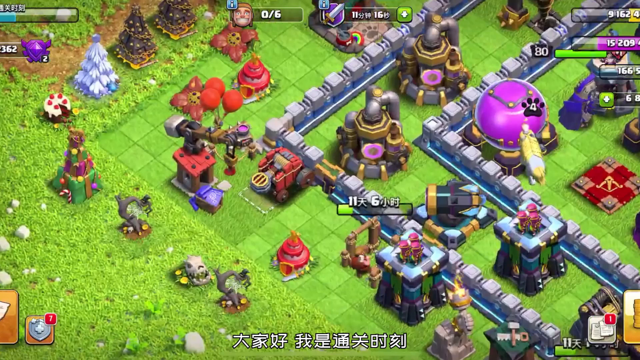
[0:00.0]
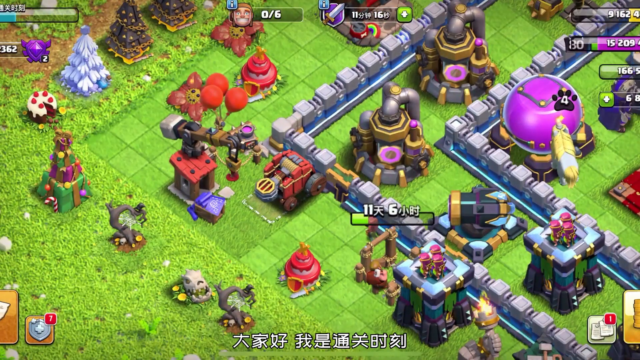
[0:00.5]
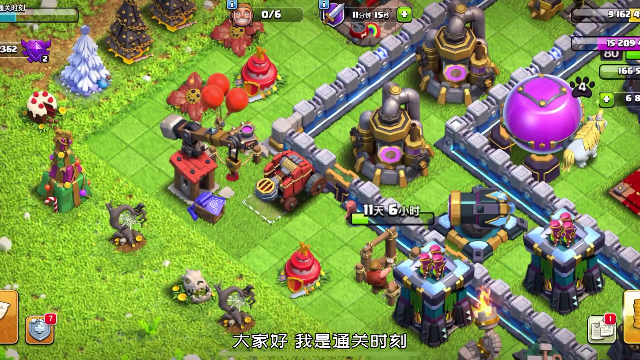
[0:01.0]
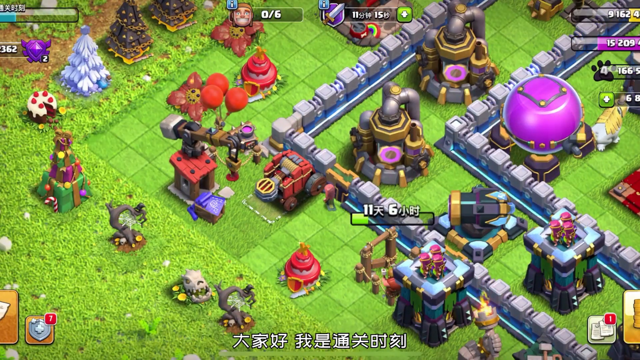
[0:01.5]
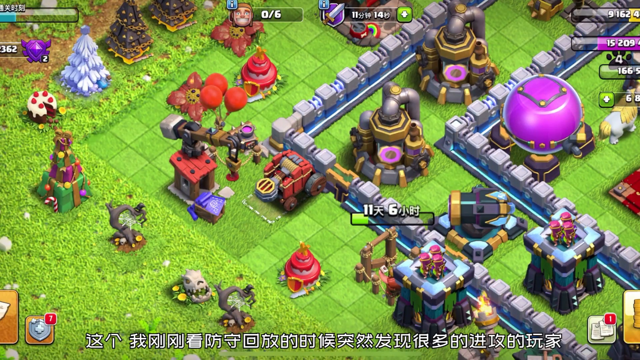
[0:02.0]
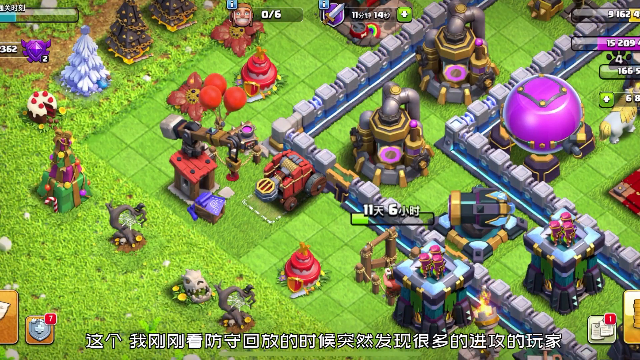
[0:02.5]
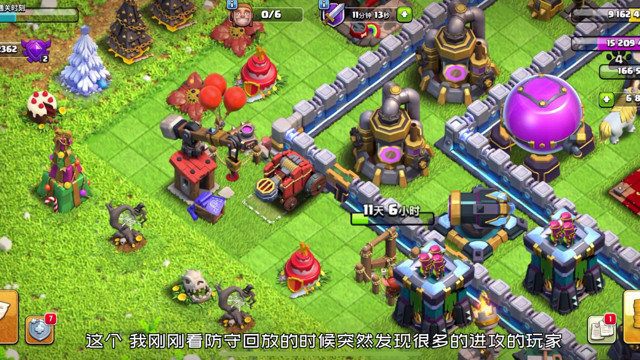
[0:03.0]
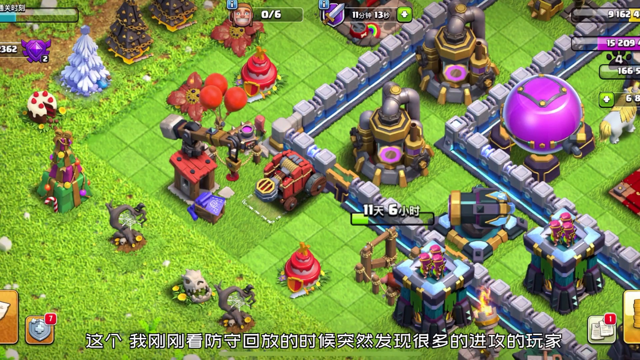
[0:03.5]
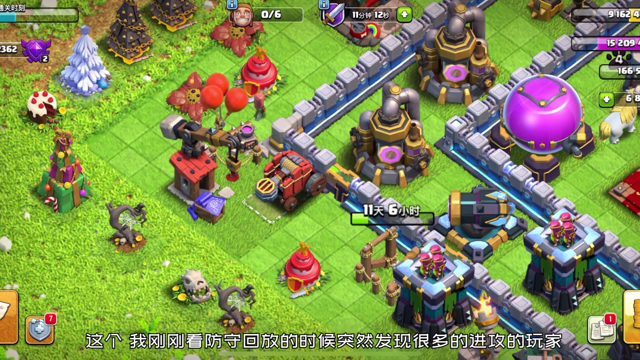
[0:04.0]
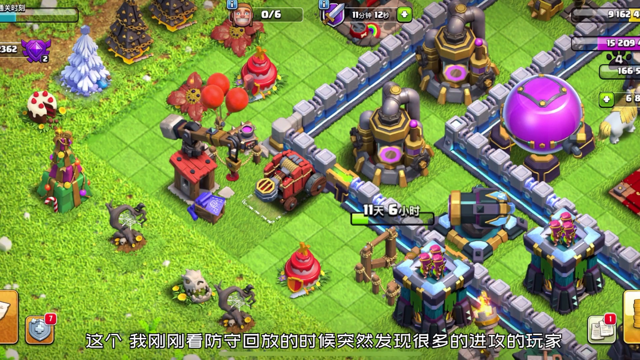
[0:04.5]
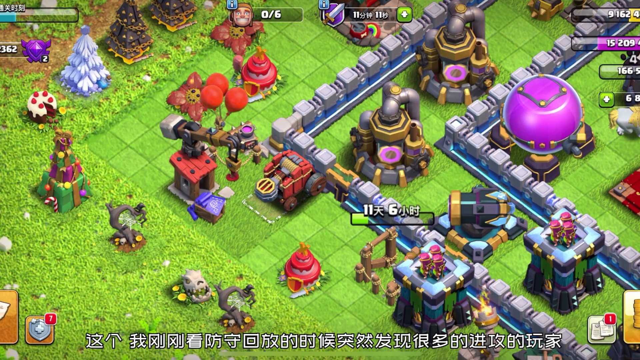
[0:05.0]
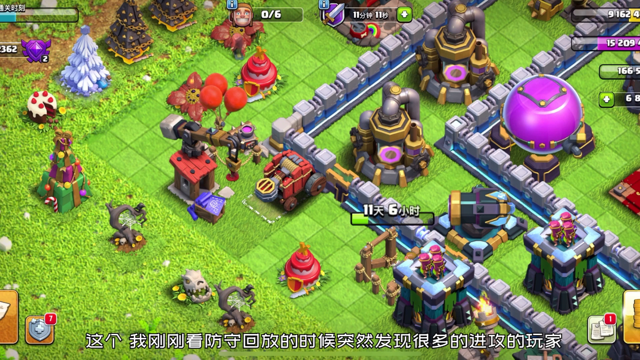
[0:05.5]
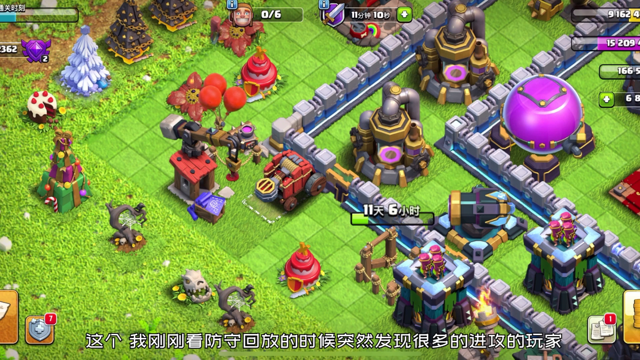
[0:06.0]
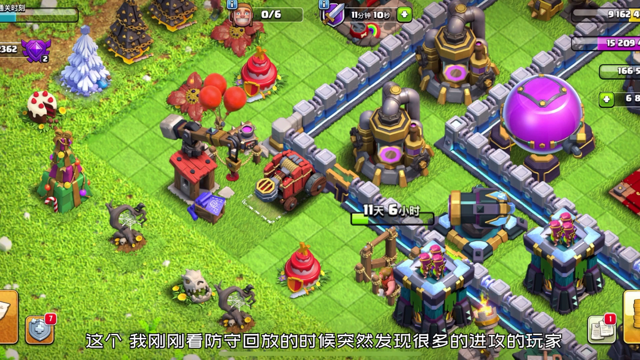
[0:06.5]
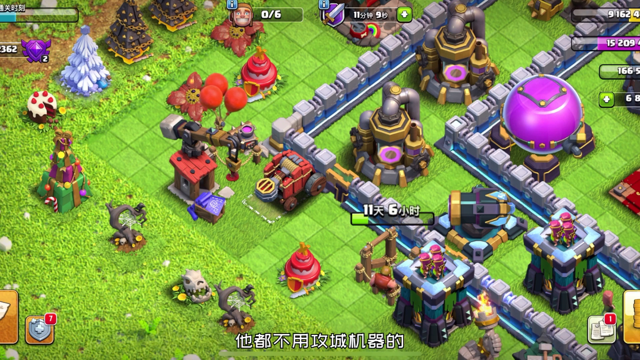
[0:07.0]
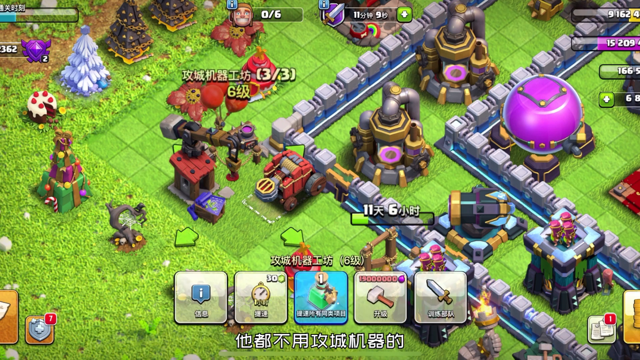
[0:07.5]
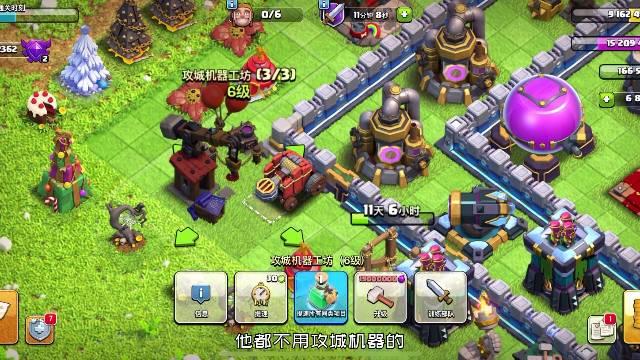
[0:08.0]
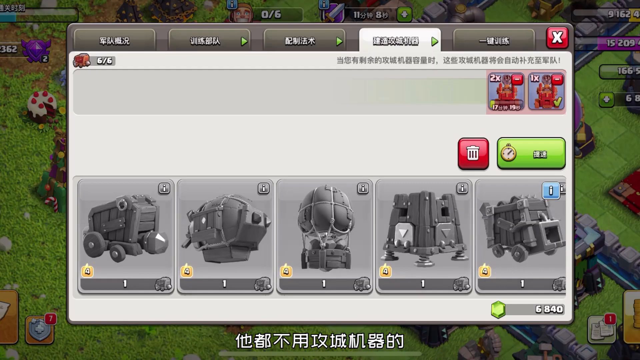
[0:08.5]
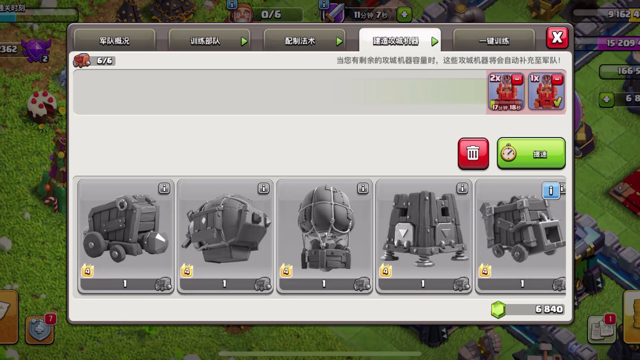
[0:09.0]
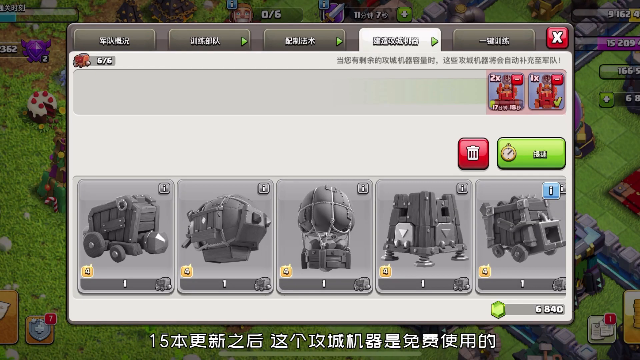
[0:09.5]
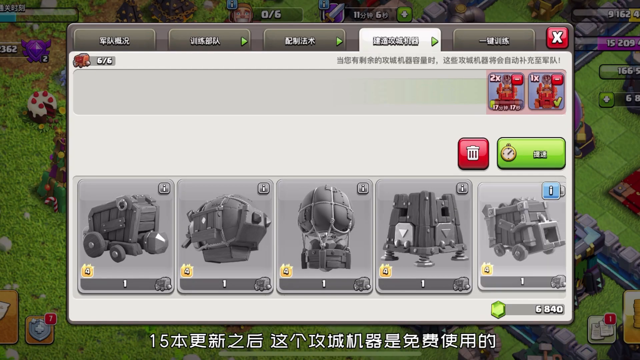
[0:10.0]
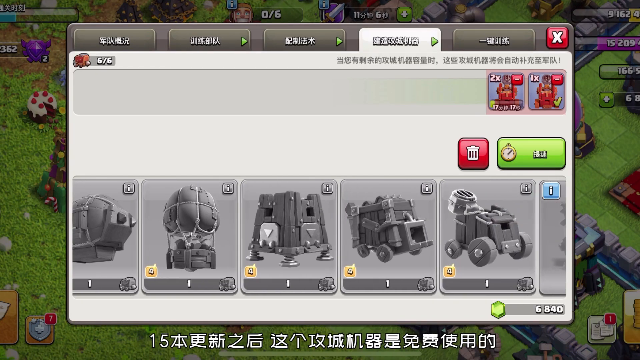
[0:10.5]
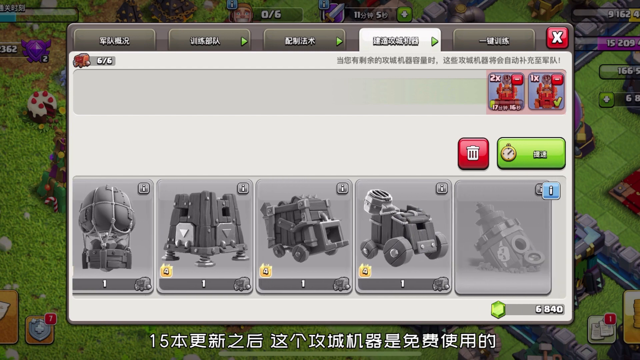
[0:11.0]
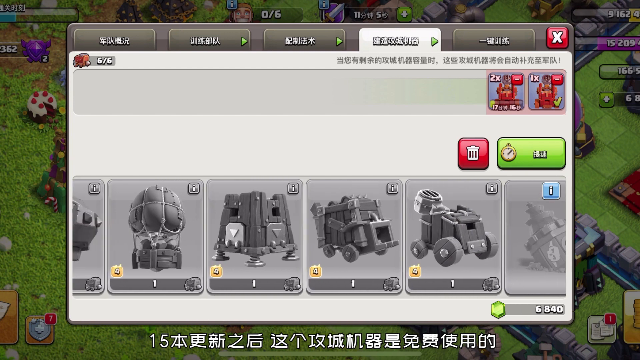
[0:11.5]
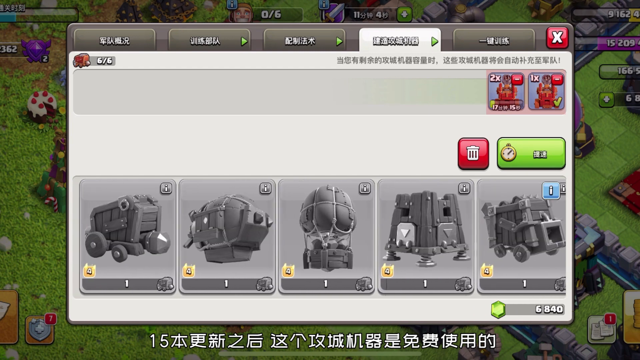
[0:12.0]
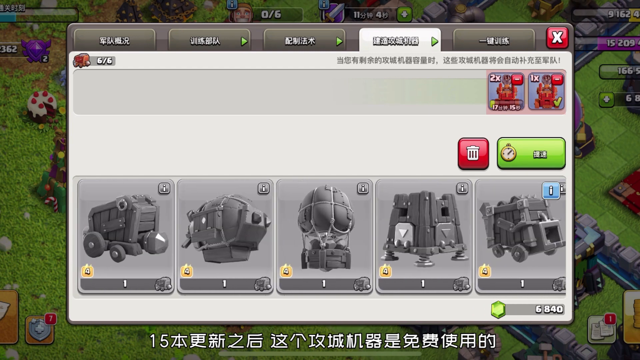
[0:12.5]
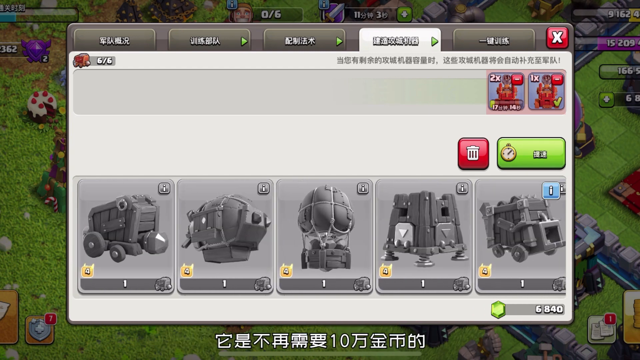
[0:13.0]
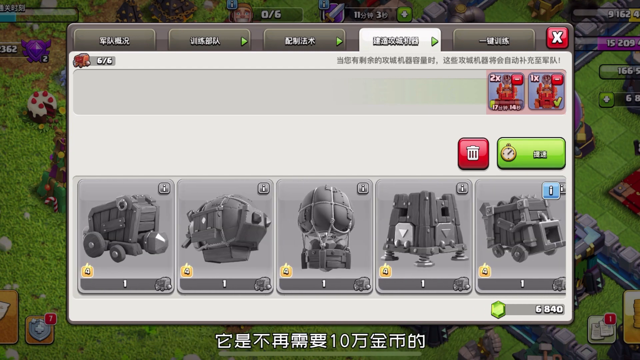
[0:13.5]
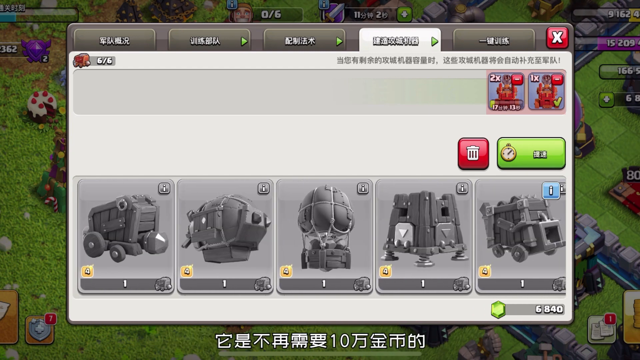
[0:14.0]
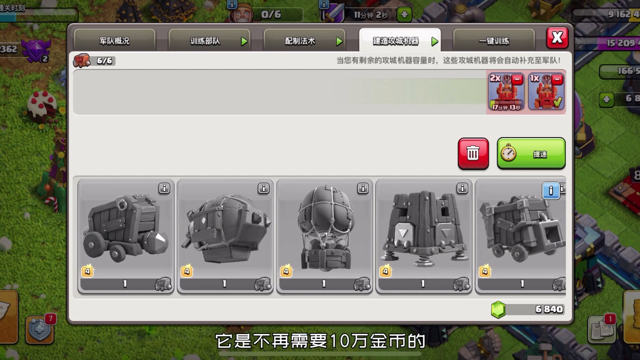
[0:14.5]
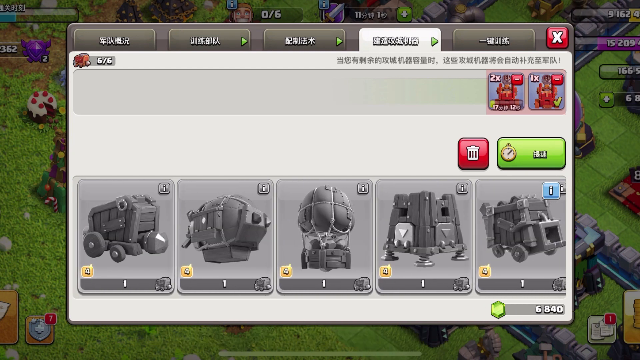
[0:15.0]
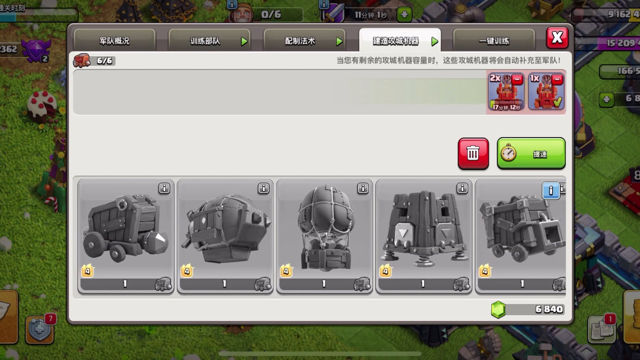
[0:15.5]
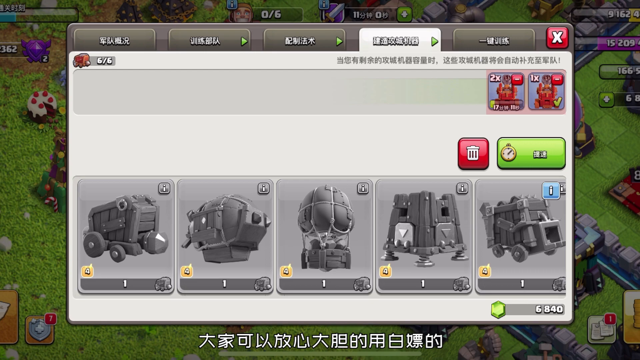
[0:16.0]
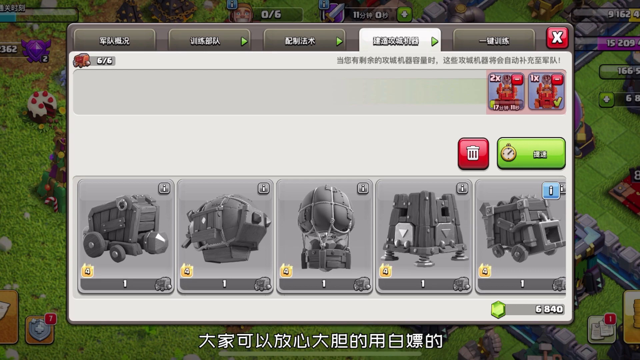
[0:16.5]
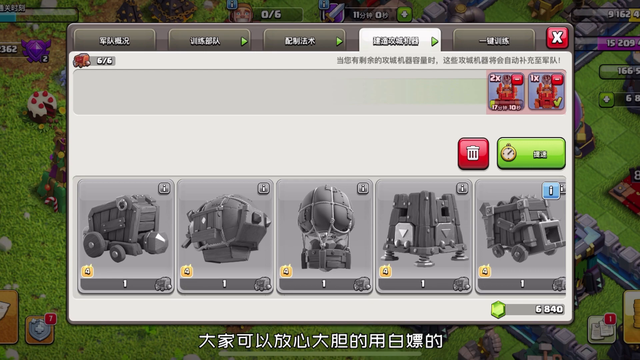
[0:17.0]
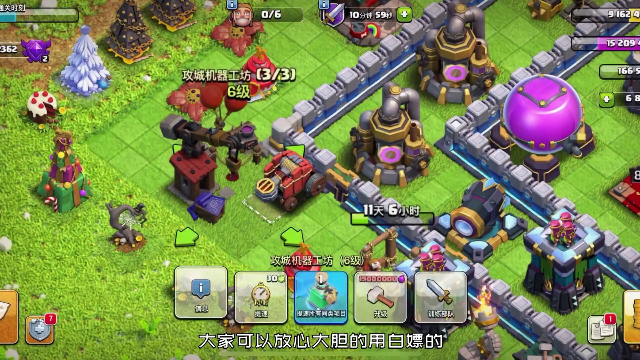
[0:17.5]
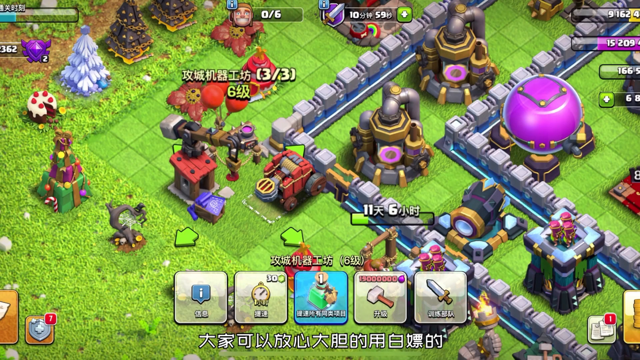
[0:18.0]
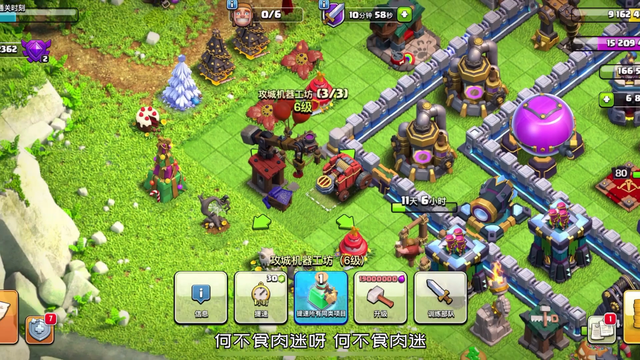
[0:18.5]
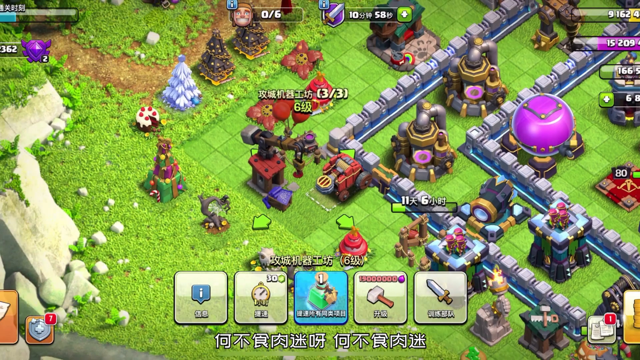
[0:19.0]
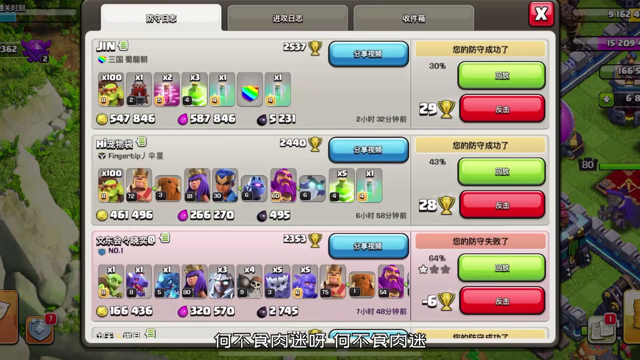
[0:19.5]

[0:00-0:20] A video game environment shows figures walking around. At first only one is walking, then more appear at the side, doing different tasks. In the second half a grey and white sign comes up, written in what seems to be an Oriental language, offering different options to pick. The options are hard to make out, but there seem to be a wooden trolley, a parachute, a wooden vehicle and similar things. The overall color is a bright green. There is a purple bubble kind of globe, and on the right some blocks divide up the different individuals and the different tubes. There are red balloons, Christmas trees on the left, wooden beams and little tiny things that are almost like tents, with many different colors and a lot going on. Near the end the view changes to another screen with more options: there is a green and a red button on the right, and images of different symbols that can possibly be bought with coins or points, the amount of which is shown at the bottom.